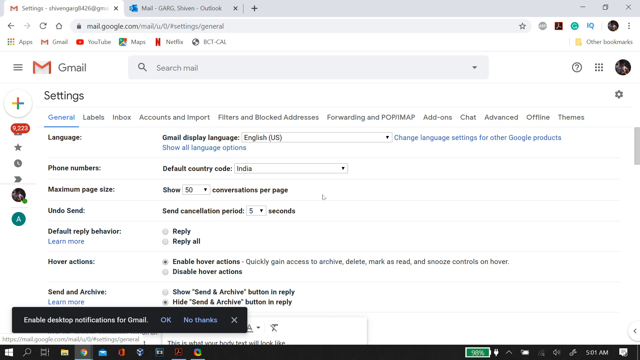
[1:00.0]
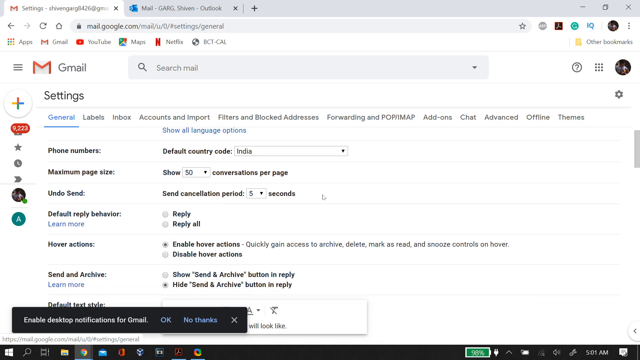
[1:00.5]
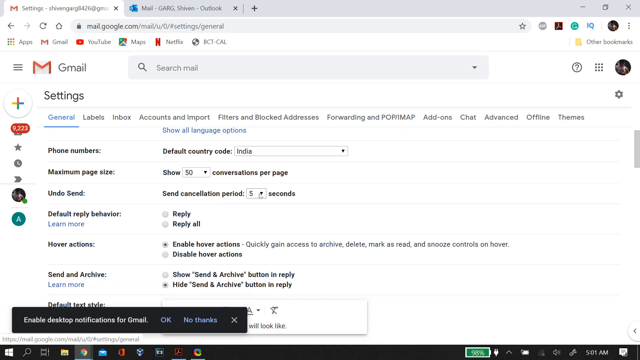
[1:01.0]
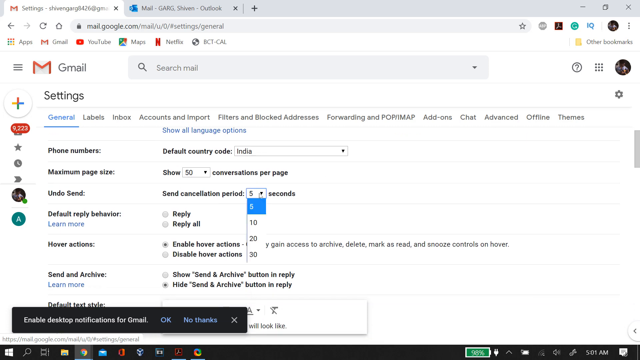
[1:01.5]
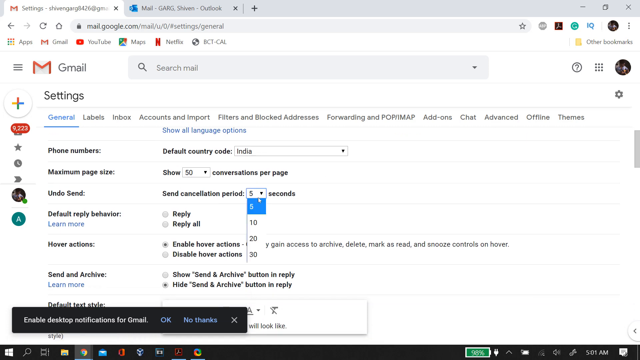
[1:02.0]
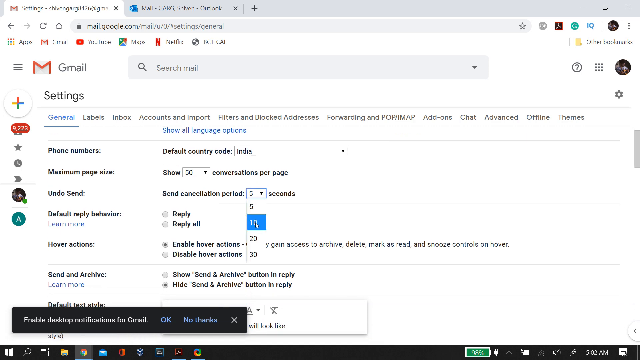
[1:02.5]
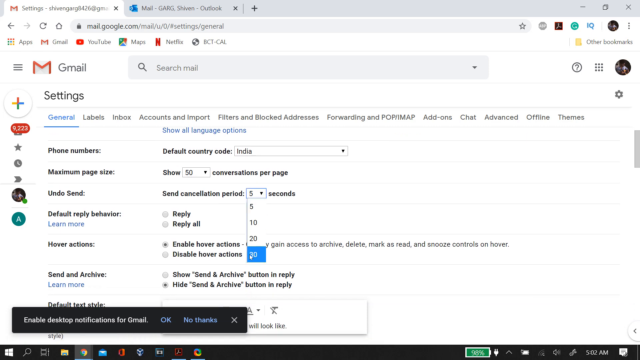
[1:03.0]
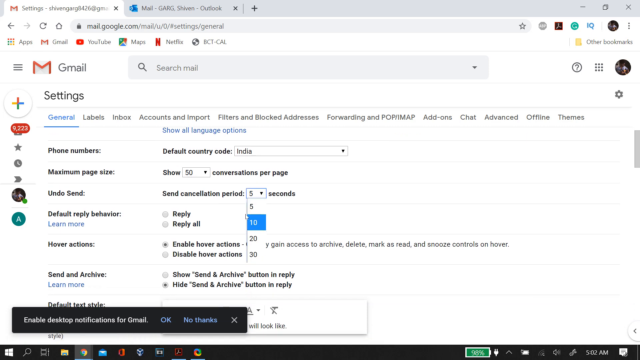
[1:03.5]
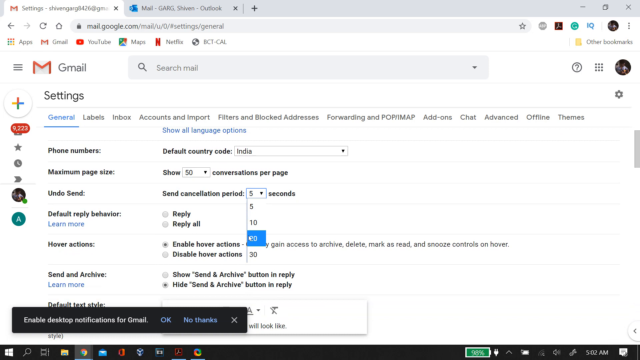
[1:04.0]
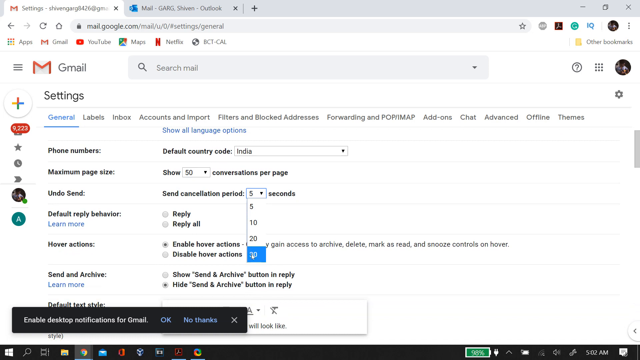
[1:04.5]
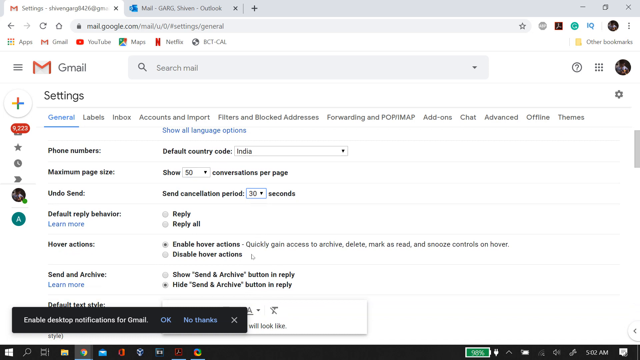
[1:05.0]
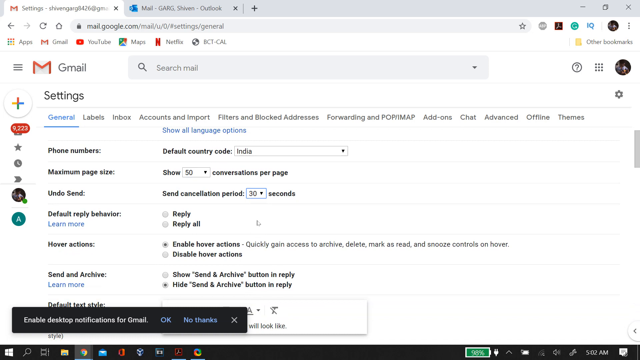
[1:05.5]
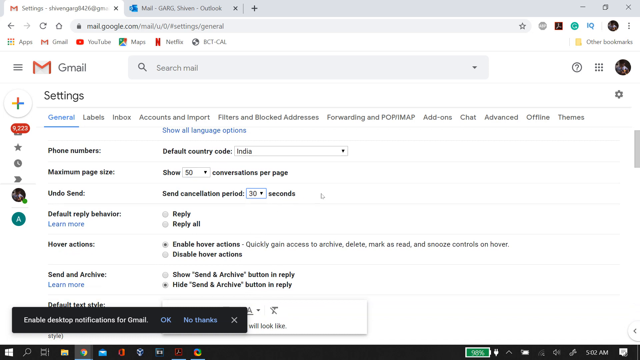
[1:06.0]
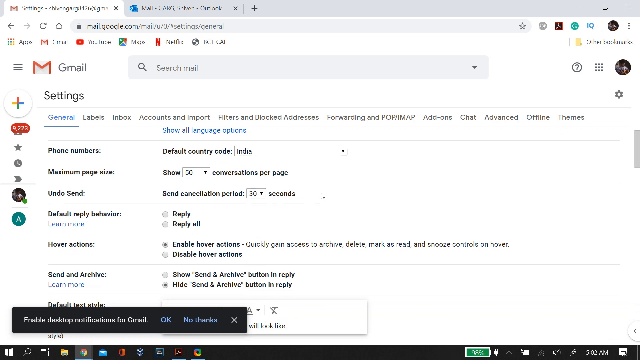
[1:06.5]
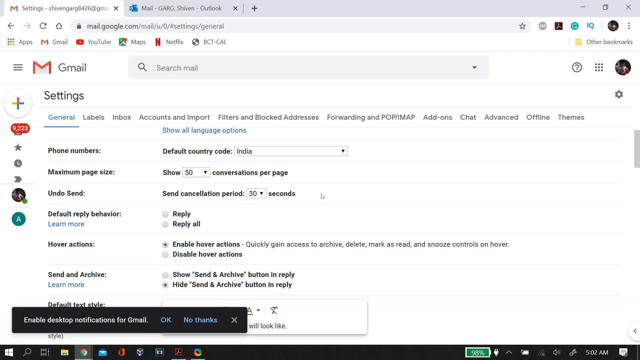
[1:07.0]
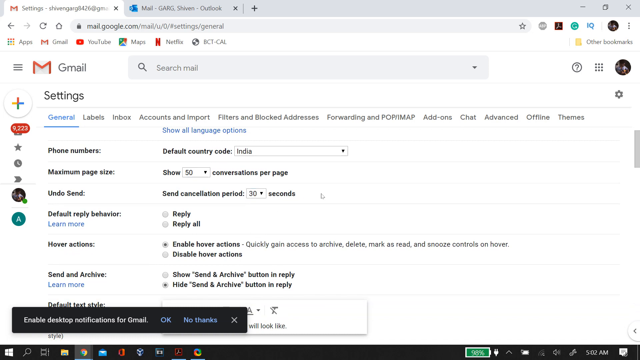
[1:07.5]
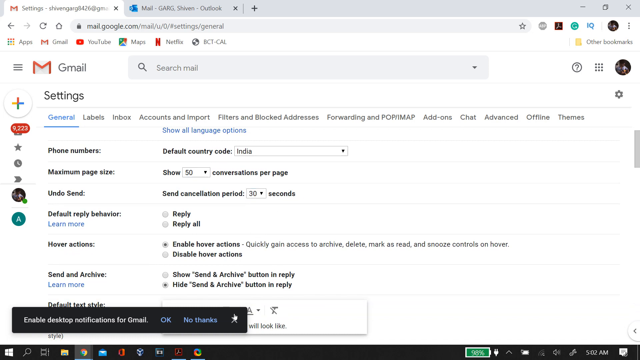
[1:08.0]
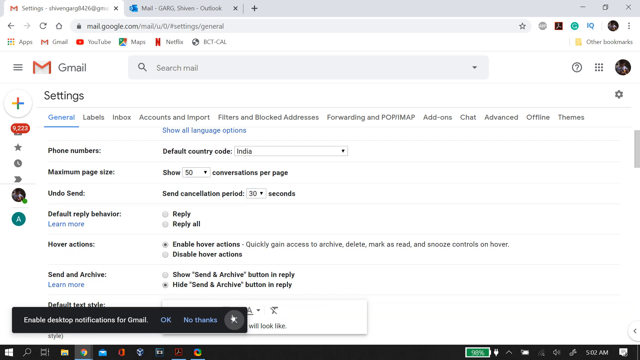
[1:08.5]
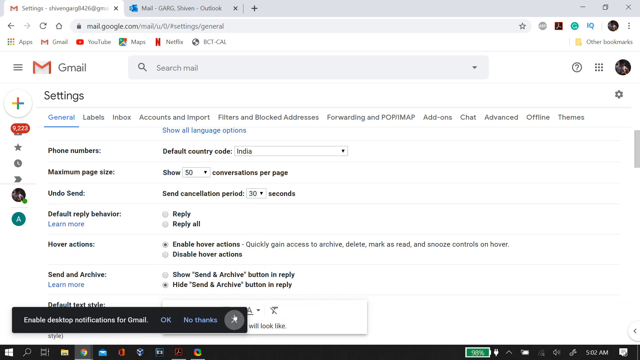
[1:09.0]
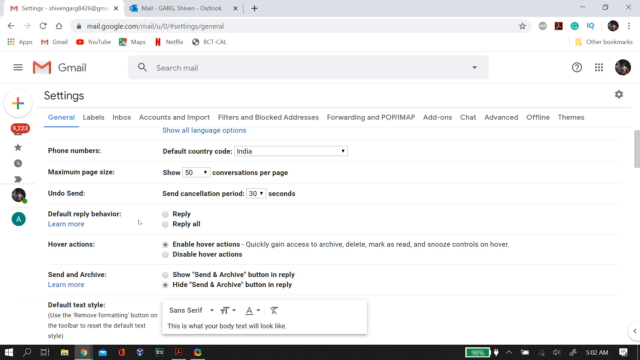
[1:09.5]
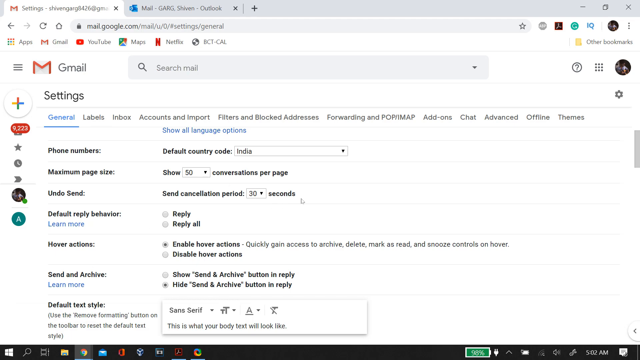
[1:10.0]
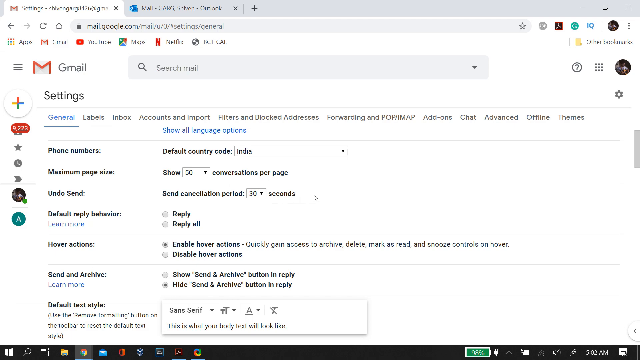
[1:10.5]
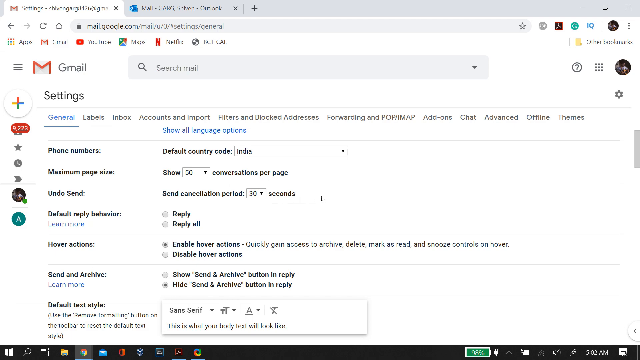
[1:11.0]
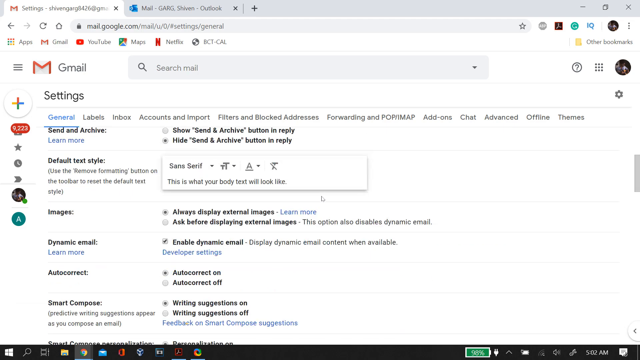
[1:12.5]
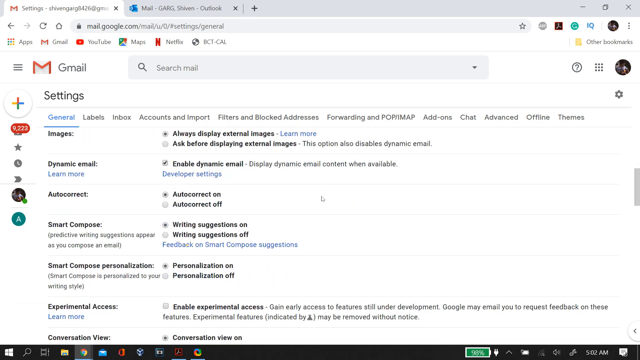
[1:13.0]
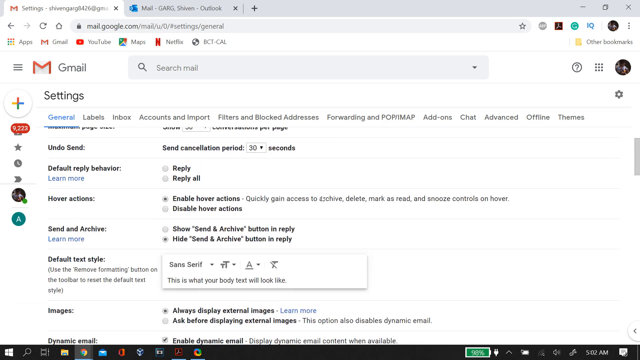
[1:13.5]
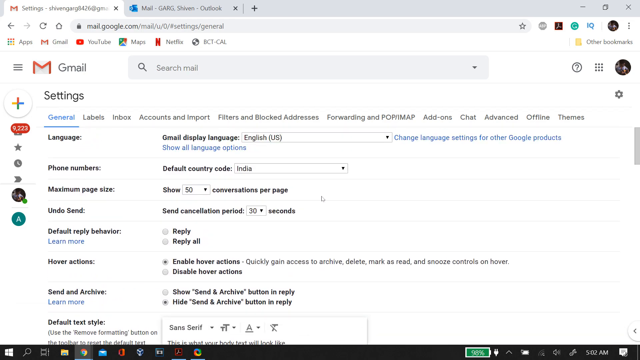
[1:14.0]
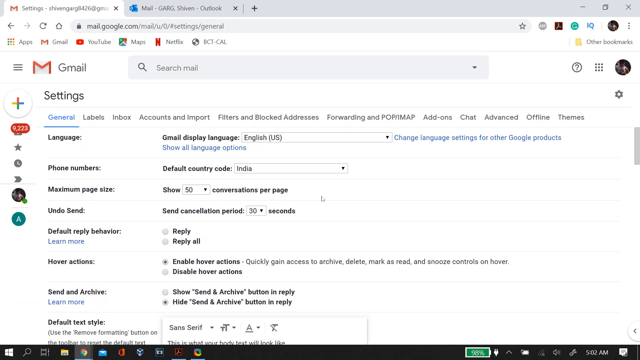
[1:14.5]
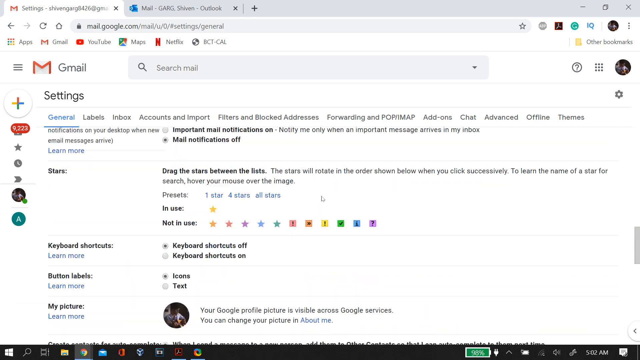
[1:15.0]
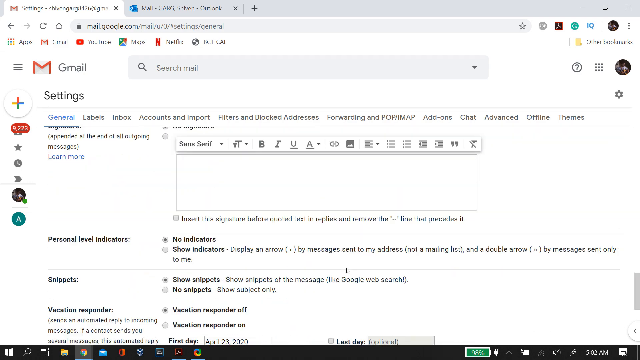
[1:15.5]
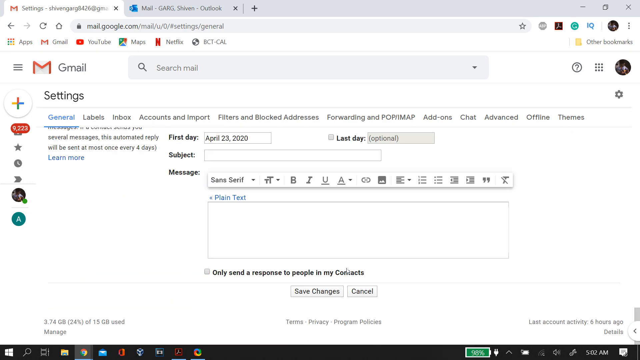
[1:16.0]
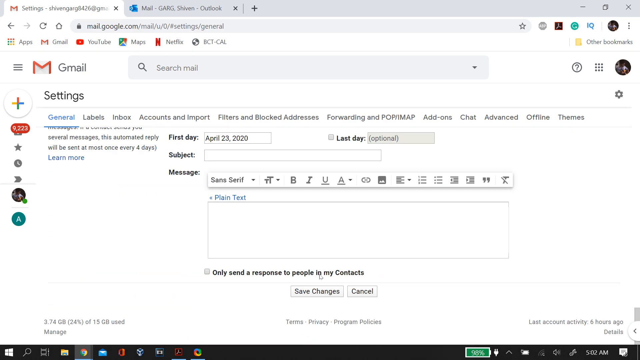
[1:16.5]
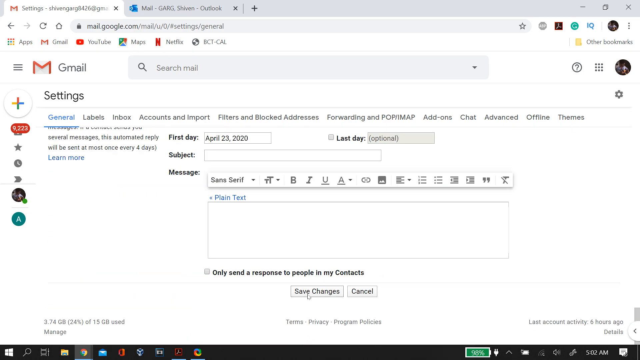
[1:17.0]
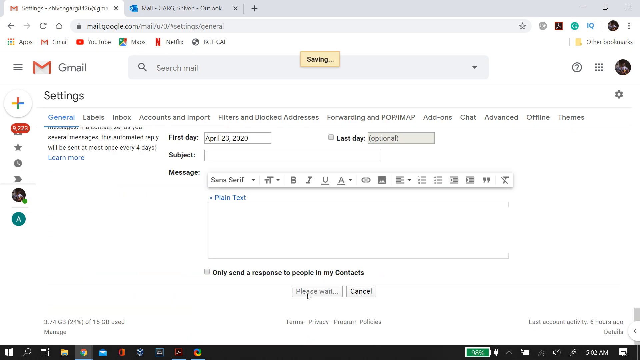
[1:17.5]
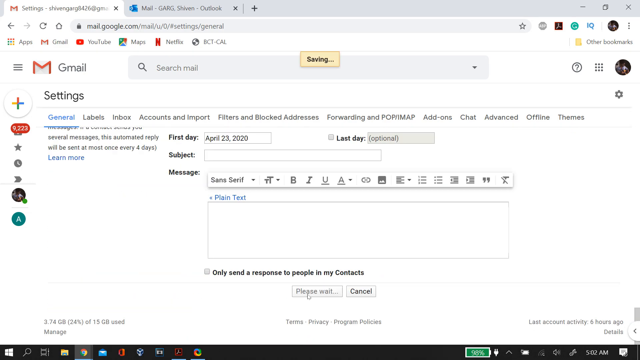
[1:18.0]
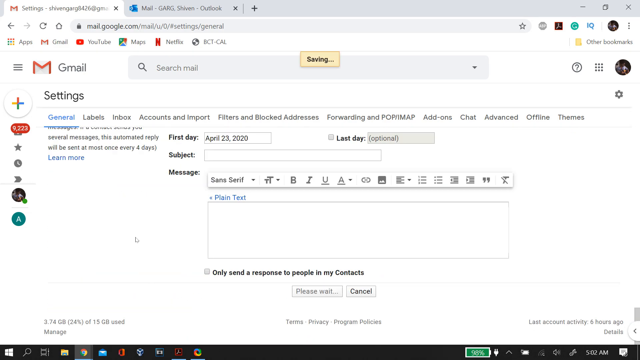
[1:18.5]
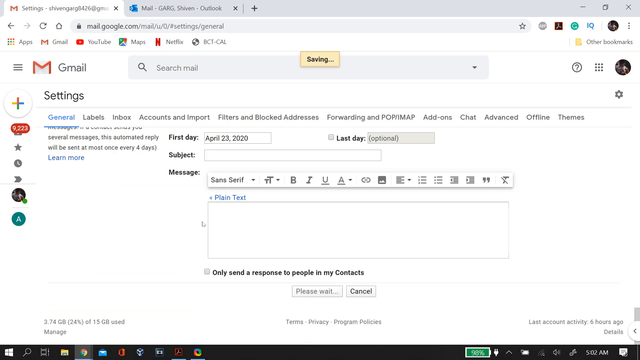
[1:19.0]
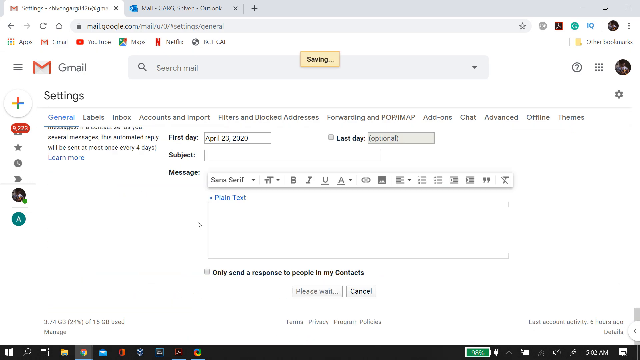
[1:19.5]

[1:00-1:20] The user seems to look over the available Gmail options and selects the one that says "cancel a shipment", which has a default value of 5 seconds. The menu shows more values: 5, 10, 20 and 30. The user chooses 30 seconds, then scrolls down past the large number of settings options, hovers the mouse over the save changes button and clicks it.